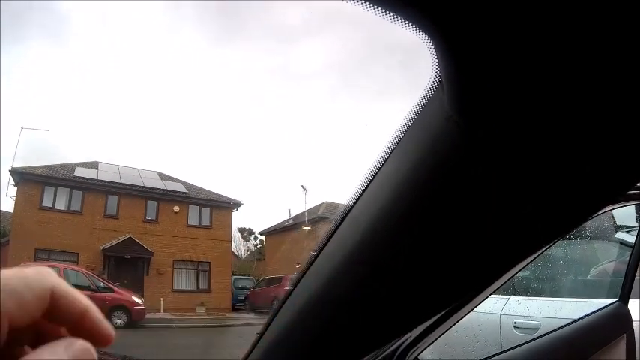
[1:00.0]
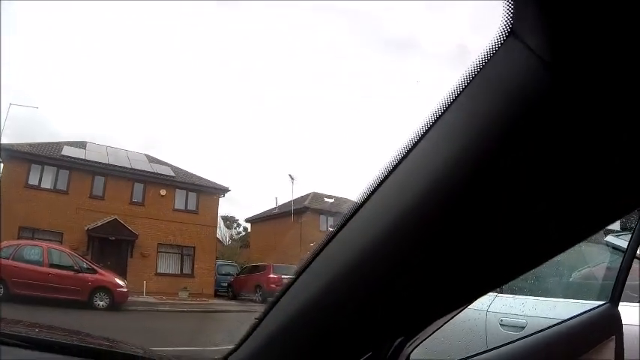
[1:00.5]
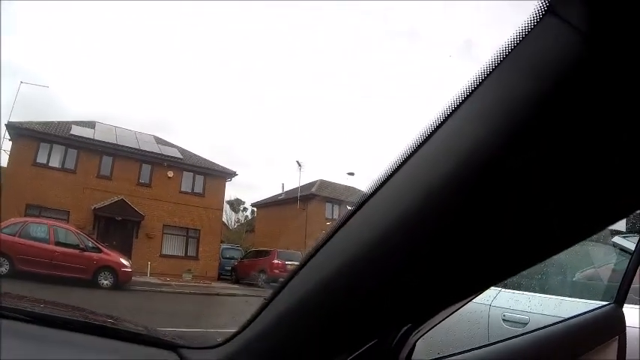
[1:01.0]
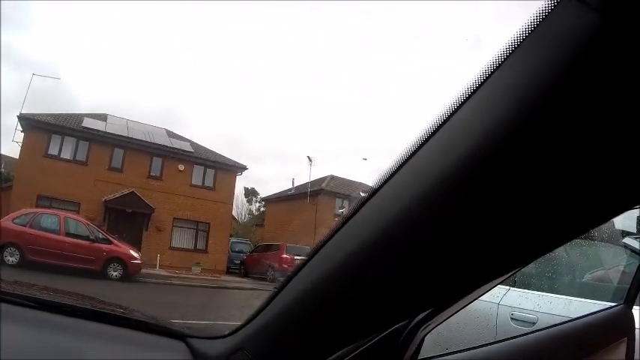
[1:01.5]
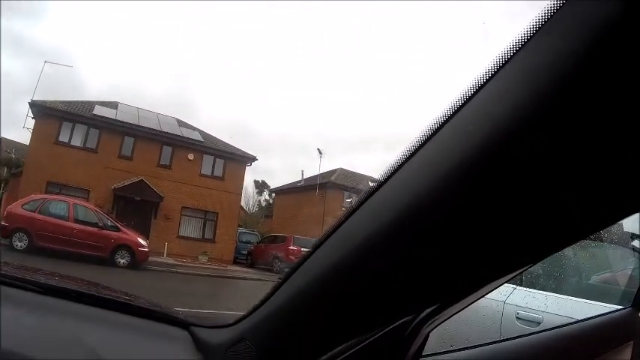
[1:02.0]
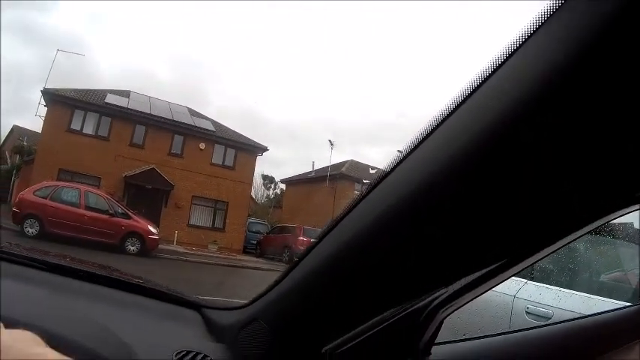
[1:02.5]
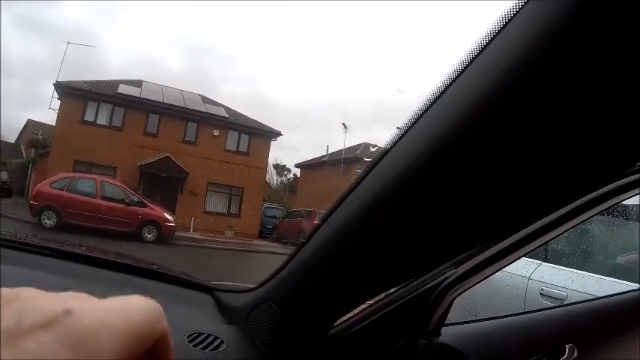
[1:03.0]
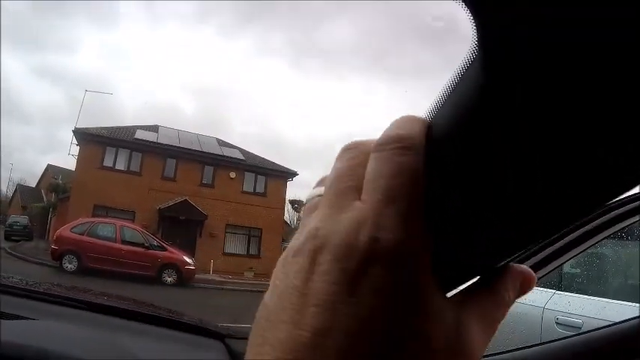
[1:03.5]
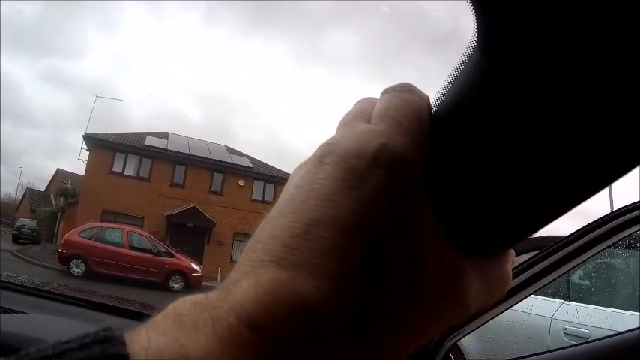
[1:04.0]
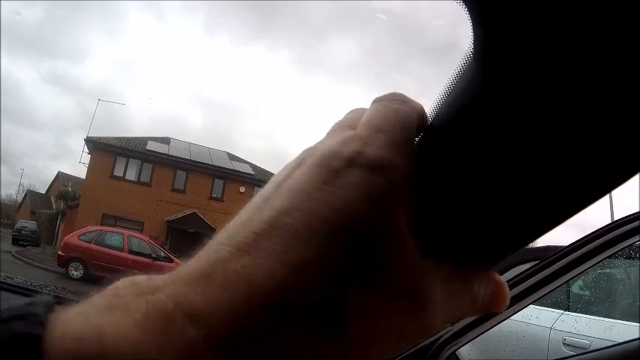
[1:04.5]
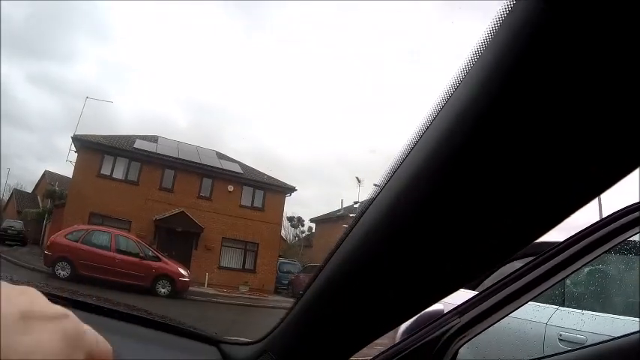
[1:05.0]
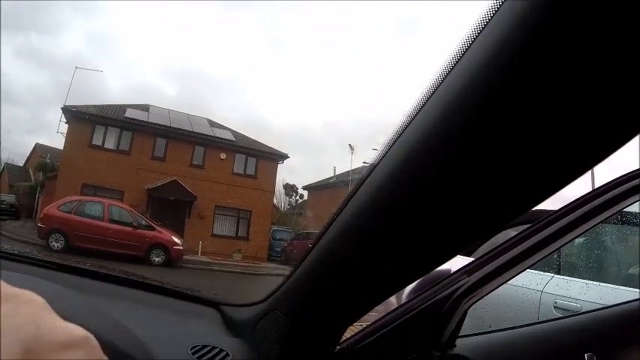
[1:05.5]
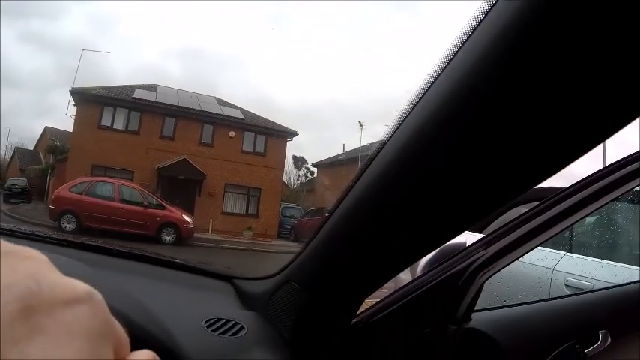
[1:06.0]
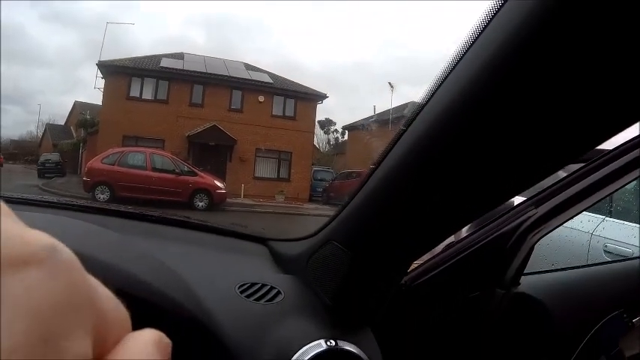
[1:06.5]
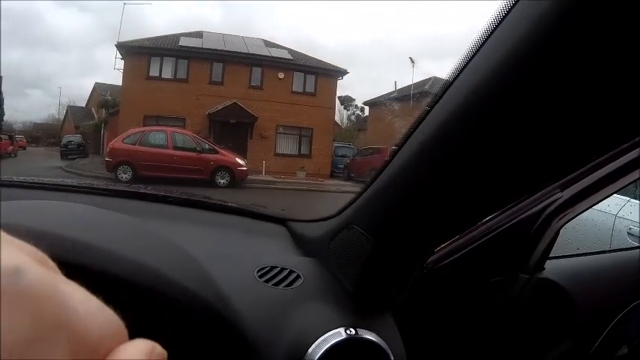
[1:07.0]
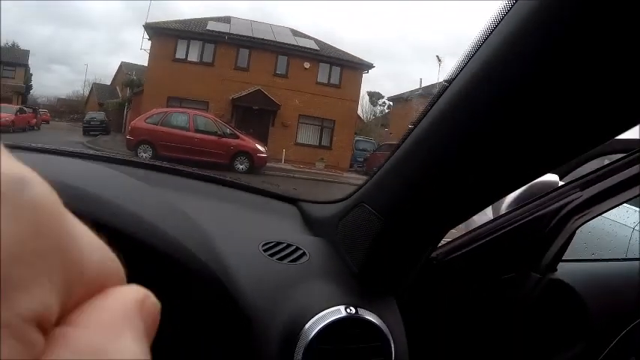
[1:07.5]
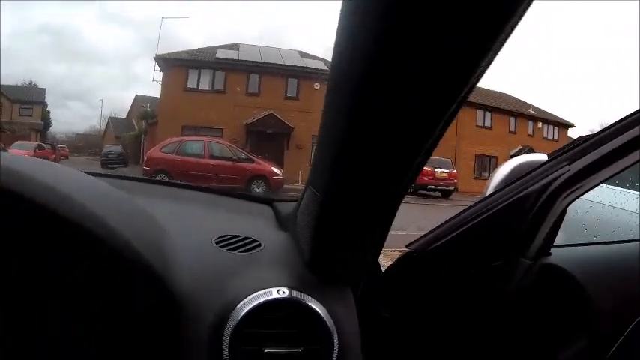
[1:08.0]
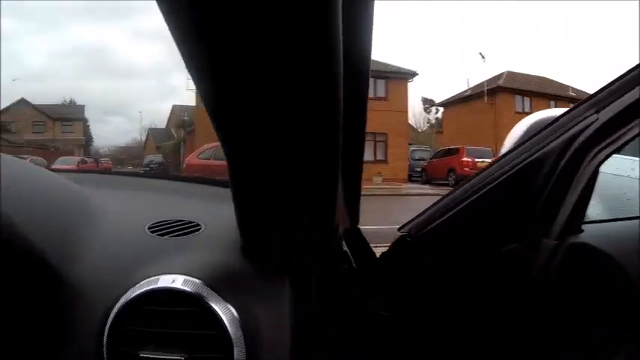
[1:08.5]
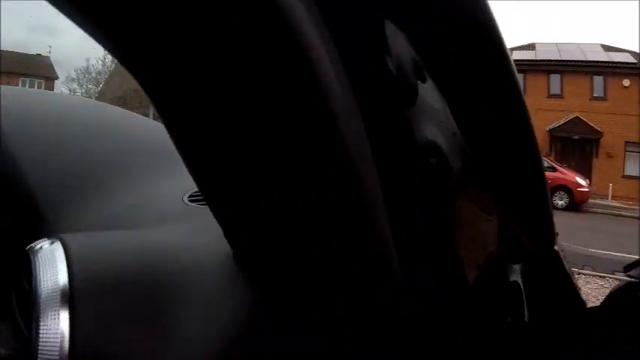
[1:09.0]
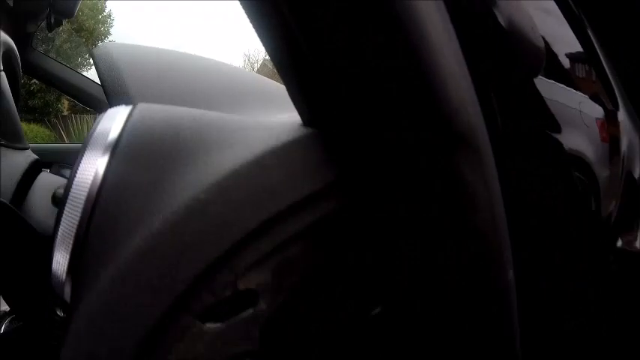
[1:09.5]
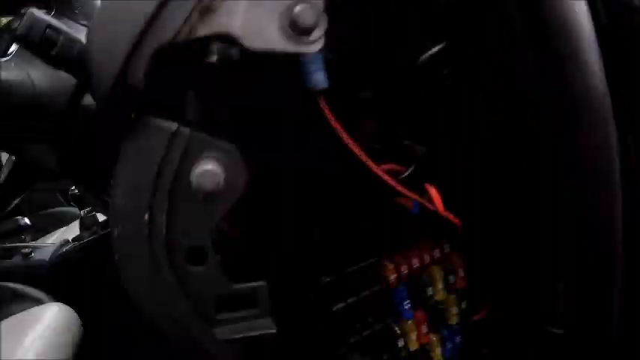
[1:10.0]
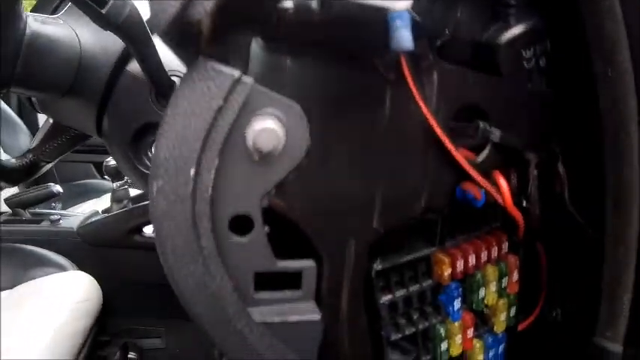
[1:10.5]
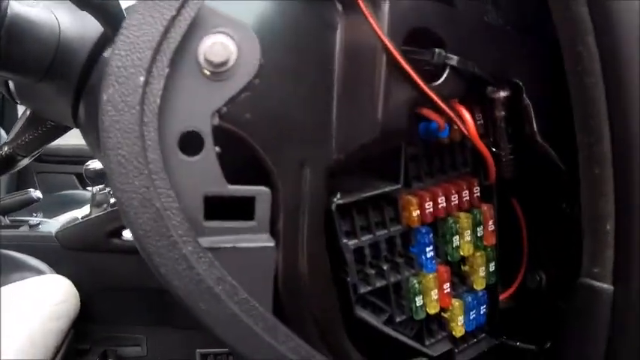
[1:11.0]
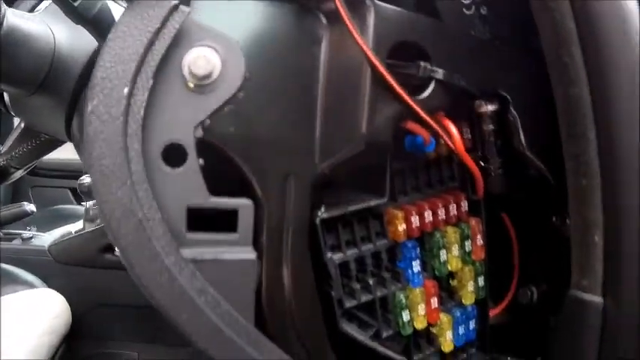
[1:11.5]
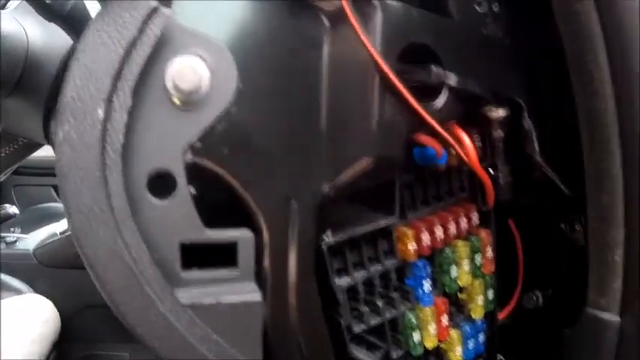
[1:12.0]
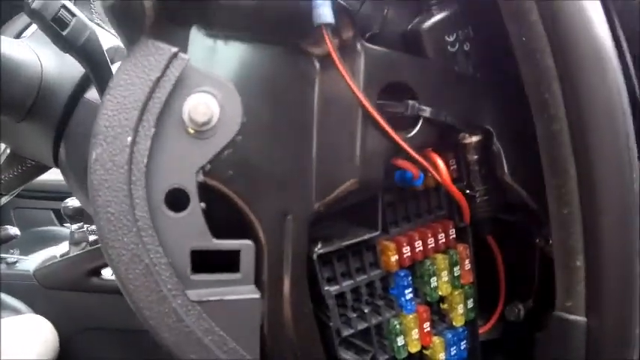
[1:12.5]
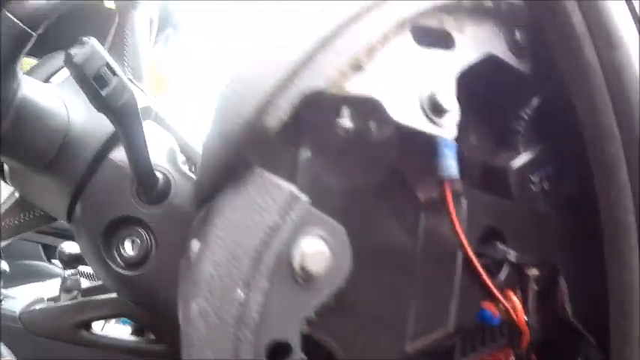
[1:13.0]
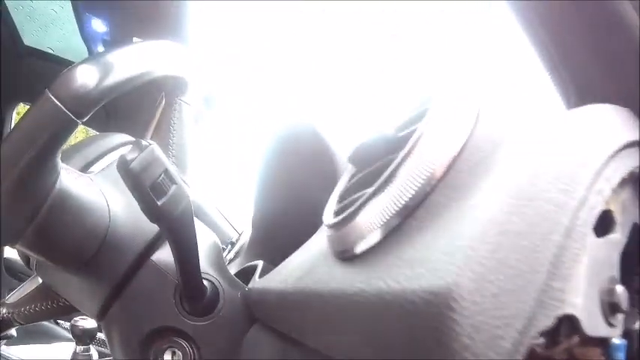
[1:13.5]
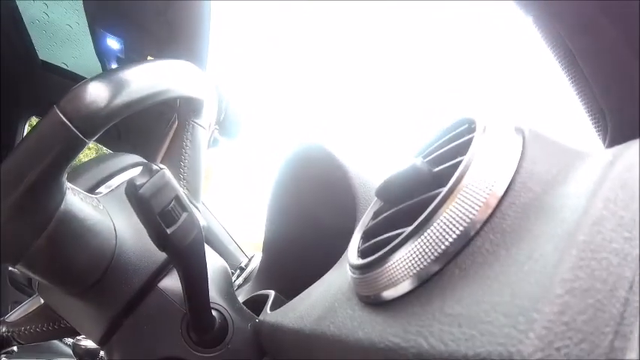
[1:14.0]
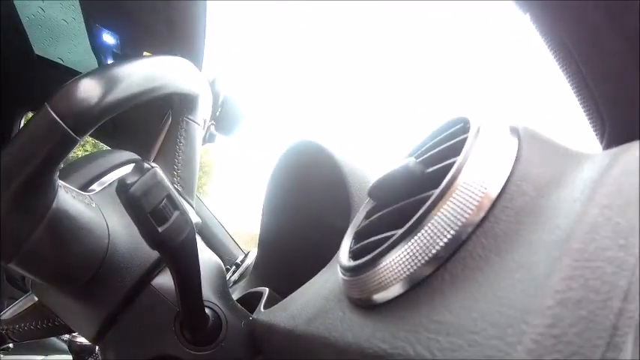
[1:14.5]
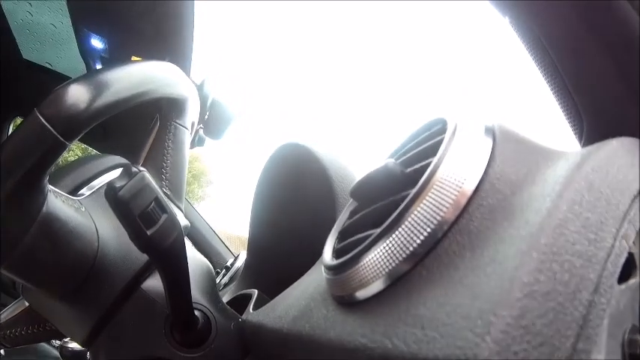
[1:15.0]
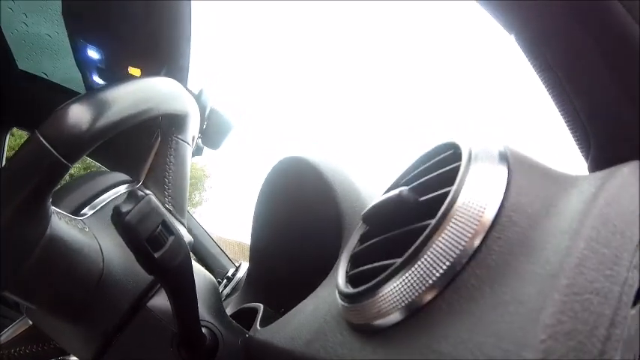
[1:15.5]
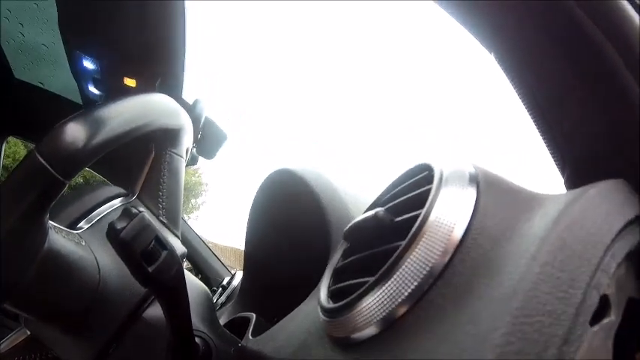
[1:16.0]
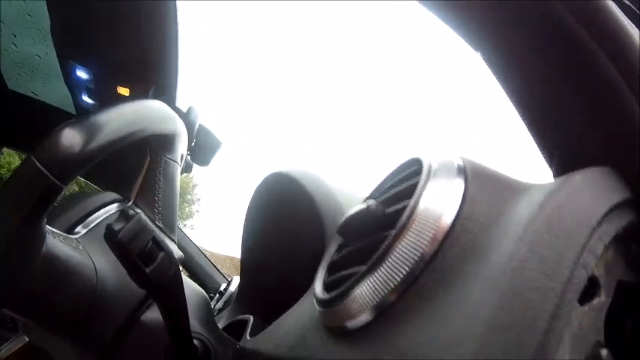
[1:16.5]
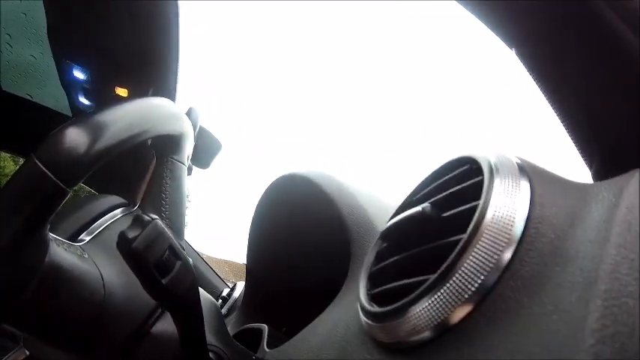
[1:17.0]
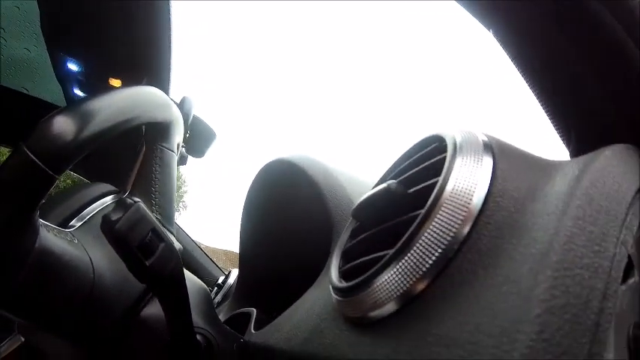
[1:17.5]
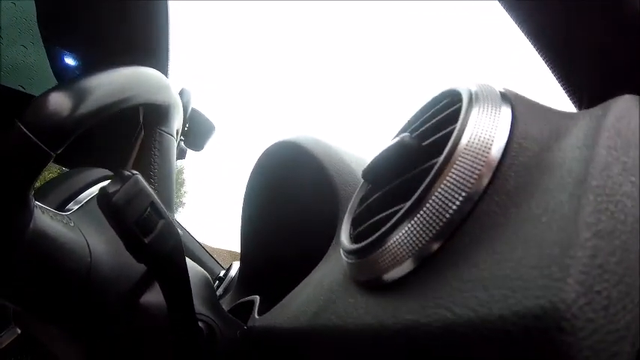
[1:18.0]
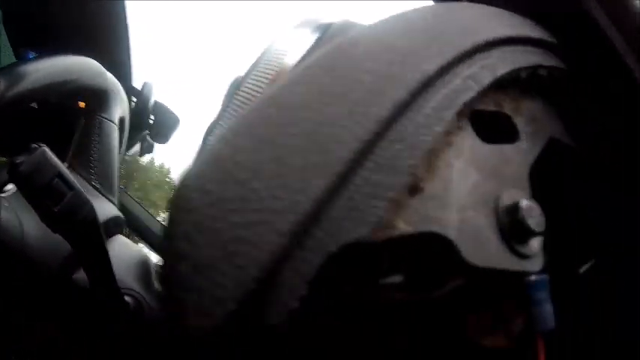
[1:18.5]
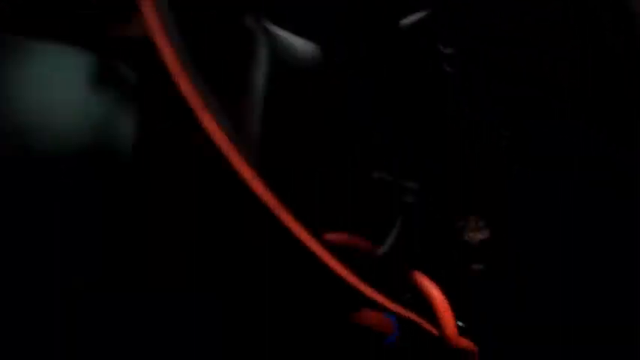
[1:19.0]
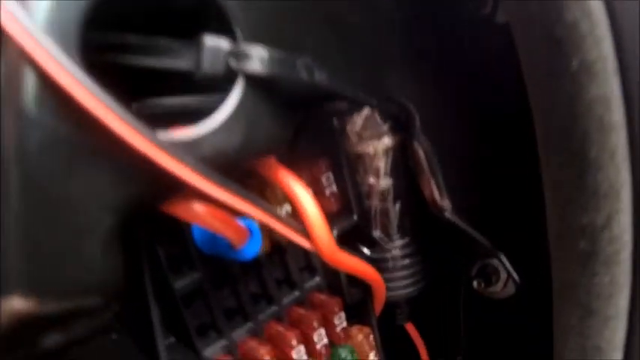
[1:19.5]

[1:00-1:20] The interior of a car is seen from a viewpoint that may be a GoPro, with a person's hand appearing almost as if it were the viewer's own. Out the front windshield are two-story houses or perhaps apartment buildings that look rather run down. They are a rusty brown color with little overhangs above the front doors. A compact dark red car is parked in front of the one directly ahead. The person uses their left hand to hold on to the area surrounding the windshield, as if testing how strong it is, and the door to their right is open. The camera pans down a little; the steering wheel is on the right side of the car and the door is open. The view then shows where a panel appears to have been taken off beside where the steering wheel connects, revealing a number of different colored things and some wires, which may be the car's fuses: some orange, some red, a couple of blue, some green and maybe a yellow one. The camera pans up to the AC vent, then quickly pans back down to the fuse box.